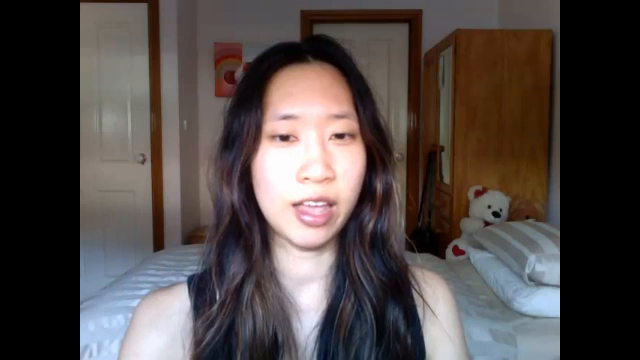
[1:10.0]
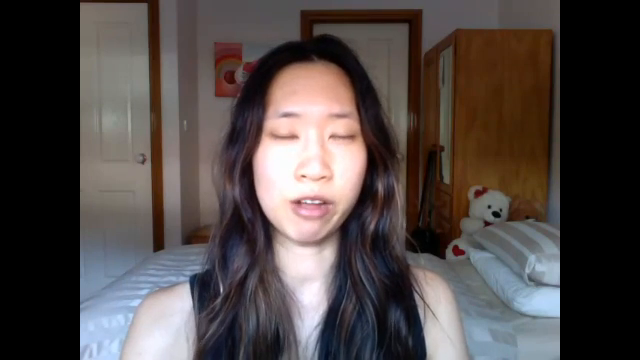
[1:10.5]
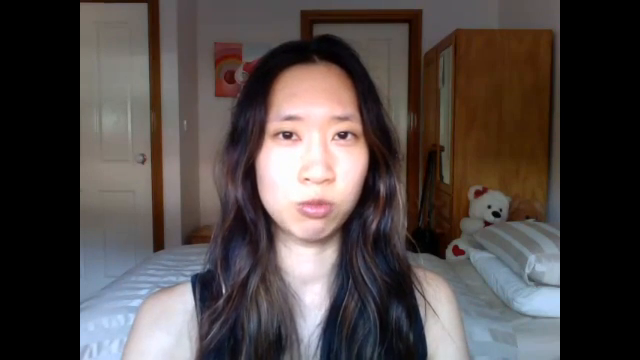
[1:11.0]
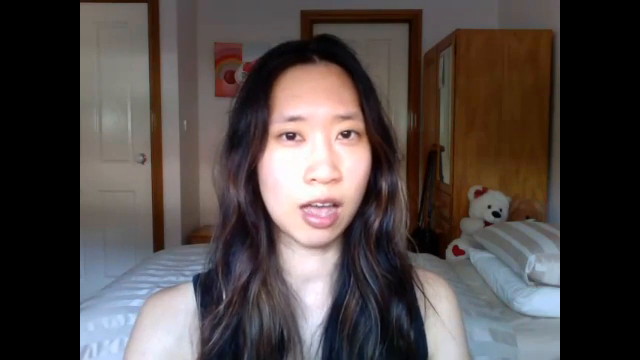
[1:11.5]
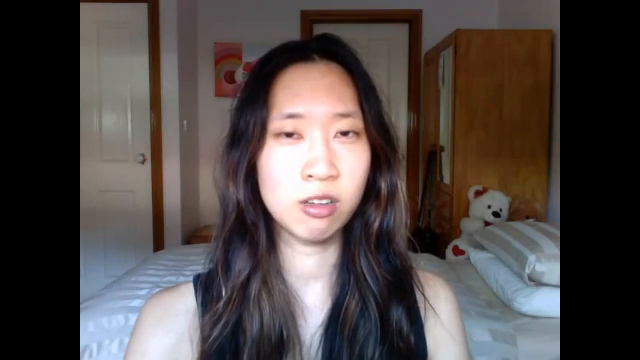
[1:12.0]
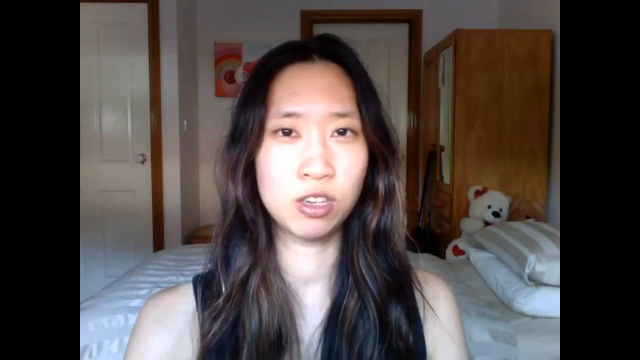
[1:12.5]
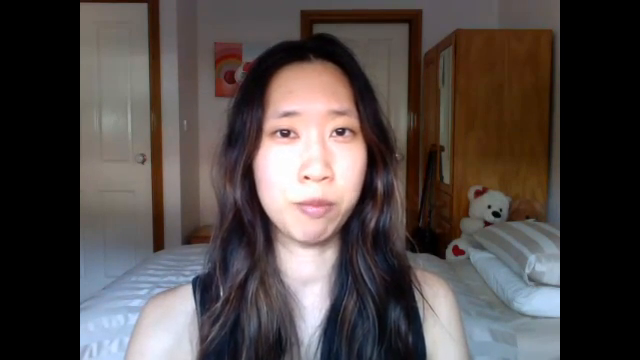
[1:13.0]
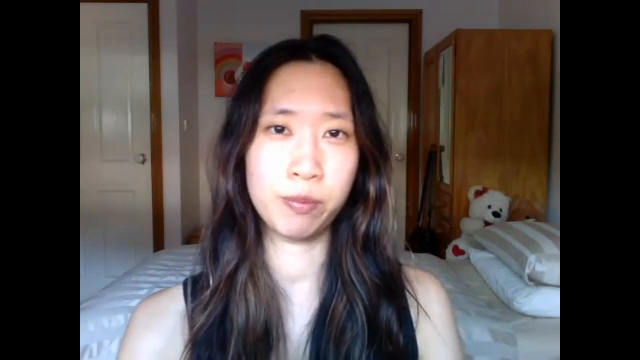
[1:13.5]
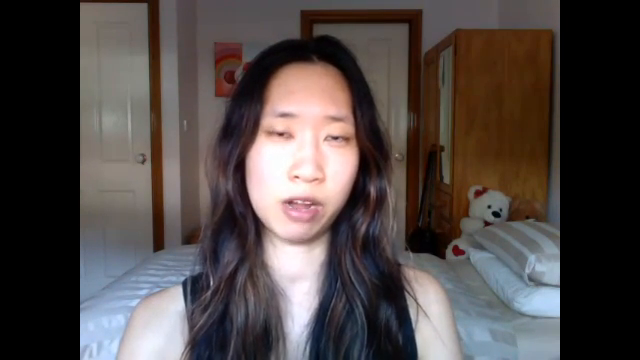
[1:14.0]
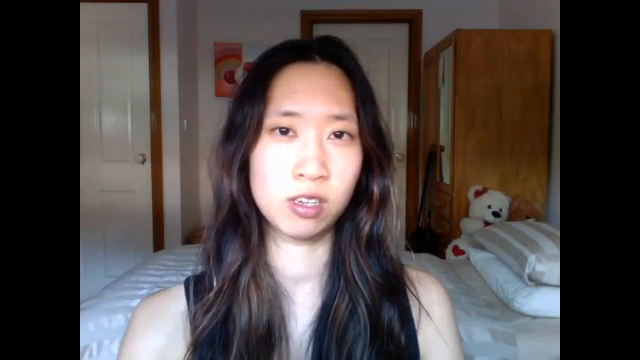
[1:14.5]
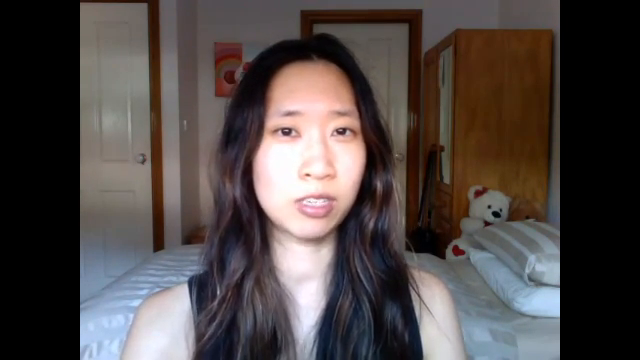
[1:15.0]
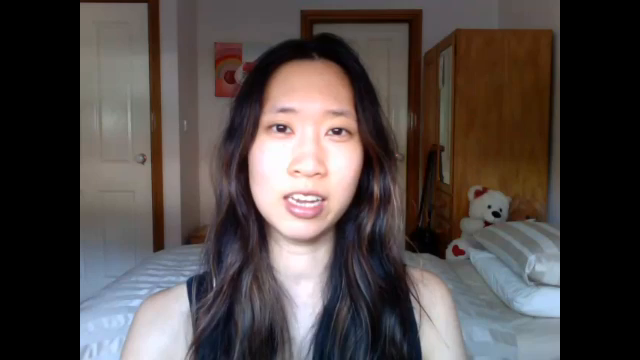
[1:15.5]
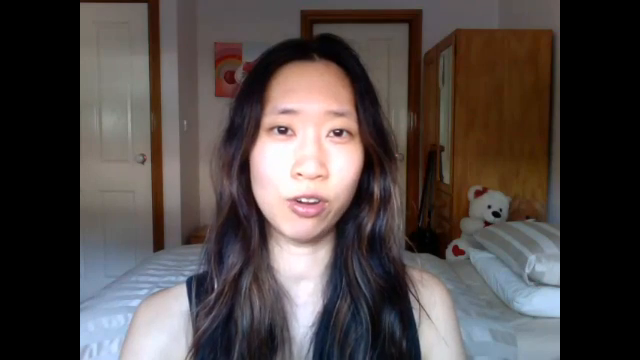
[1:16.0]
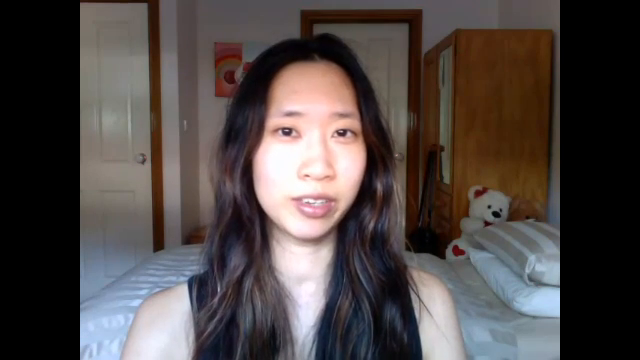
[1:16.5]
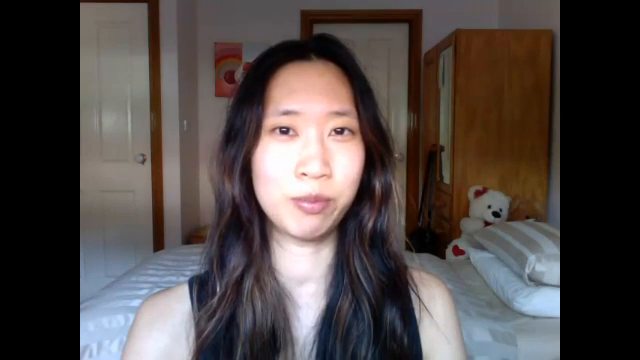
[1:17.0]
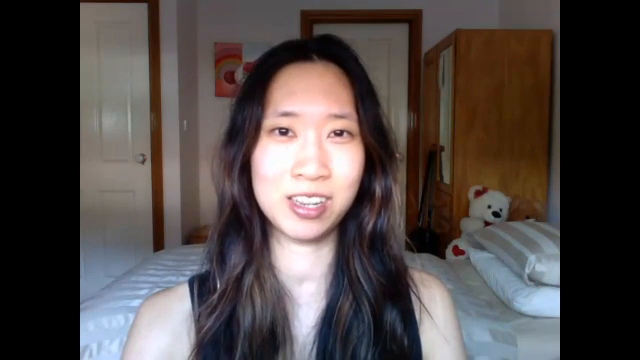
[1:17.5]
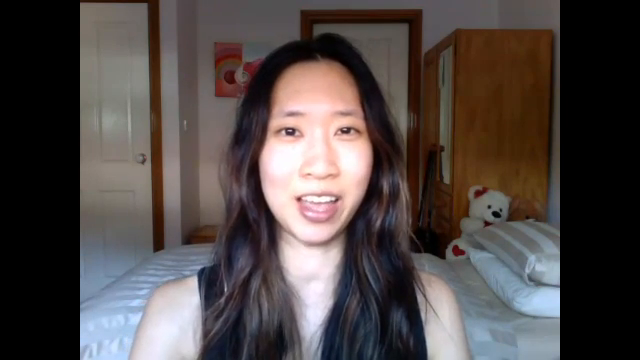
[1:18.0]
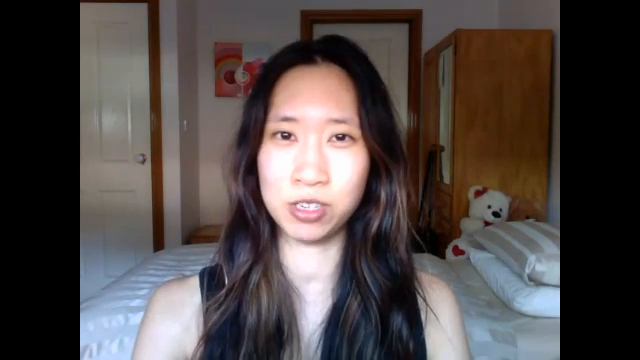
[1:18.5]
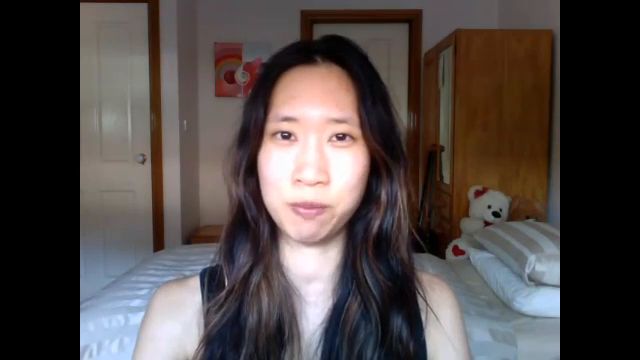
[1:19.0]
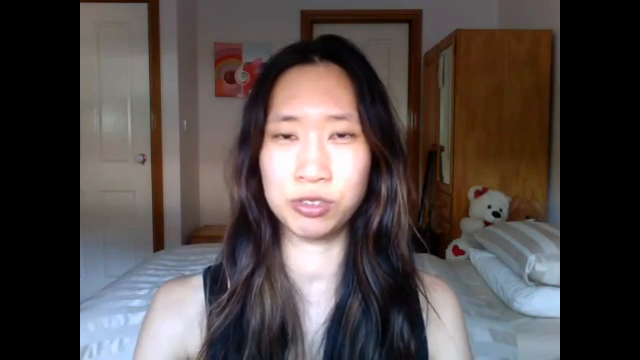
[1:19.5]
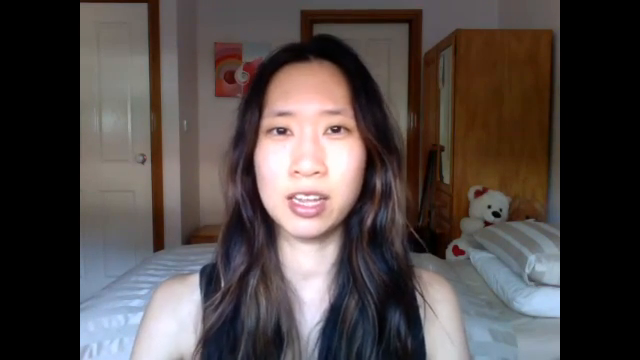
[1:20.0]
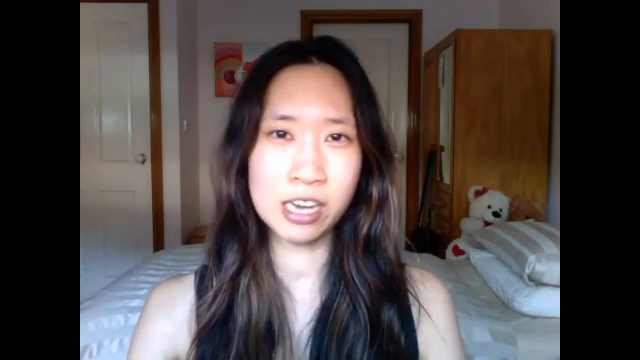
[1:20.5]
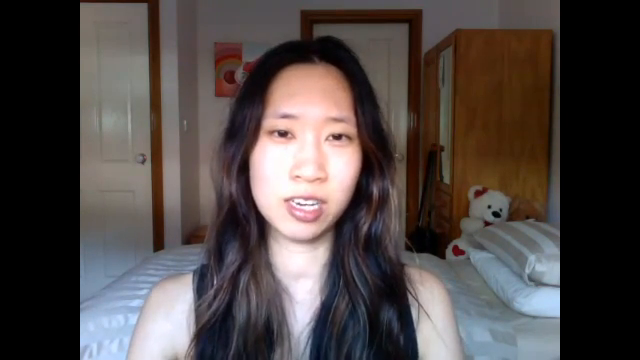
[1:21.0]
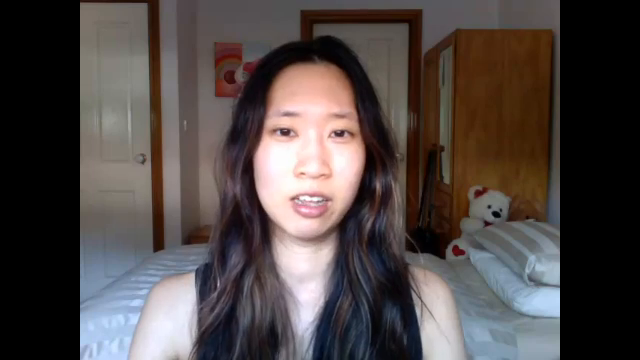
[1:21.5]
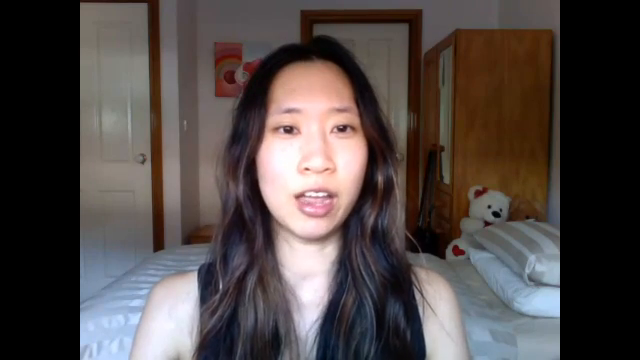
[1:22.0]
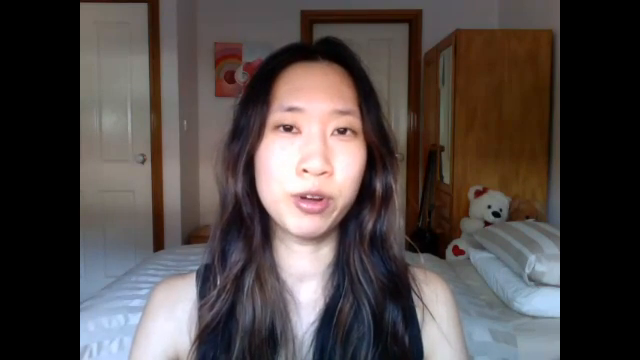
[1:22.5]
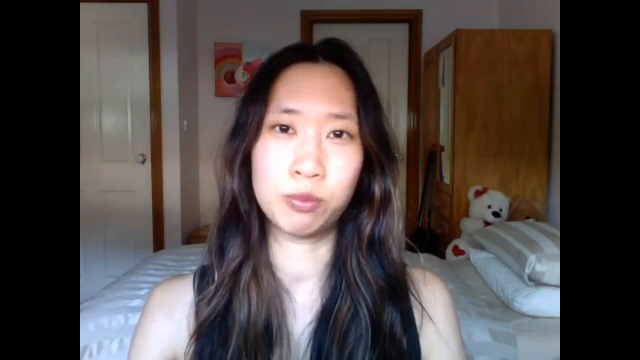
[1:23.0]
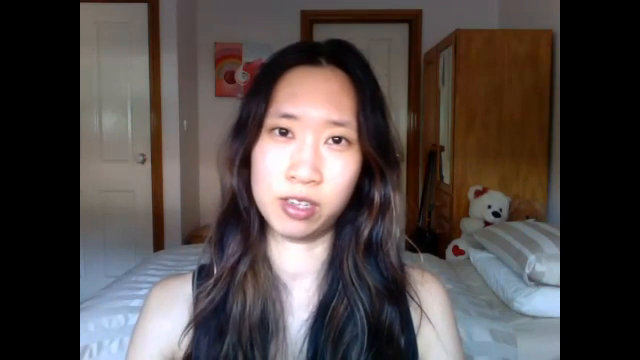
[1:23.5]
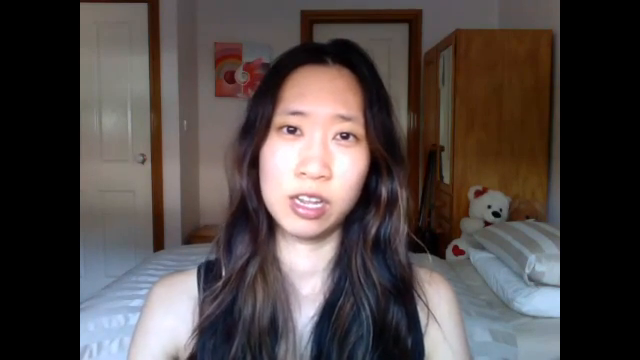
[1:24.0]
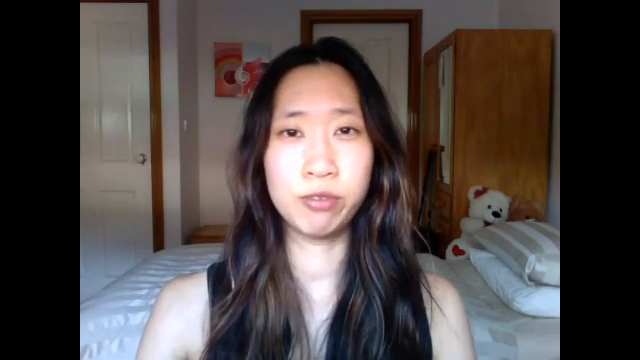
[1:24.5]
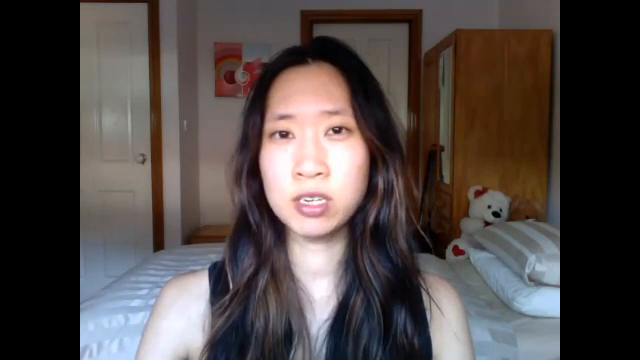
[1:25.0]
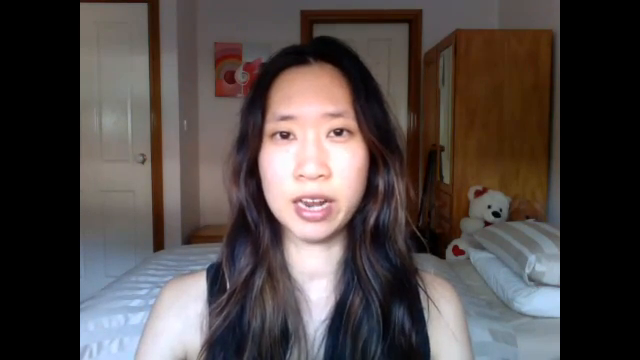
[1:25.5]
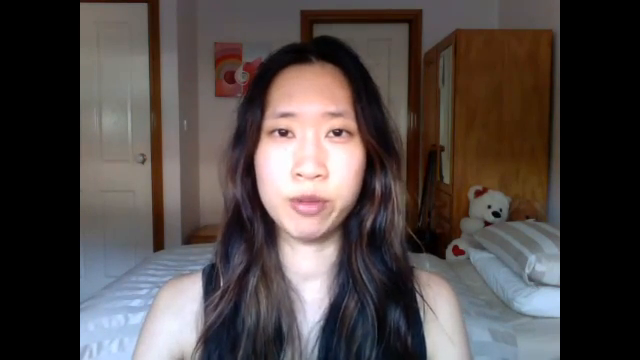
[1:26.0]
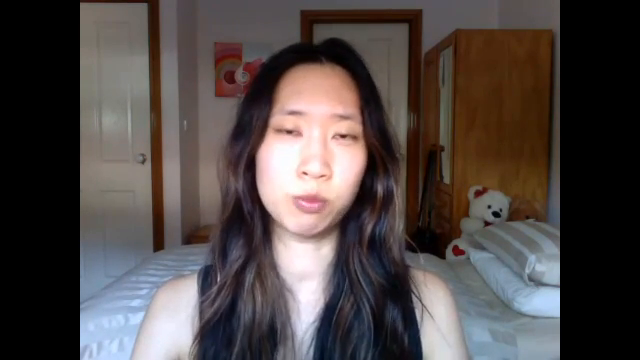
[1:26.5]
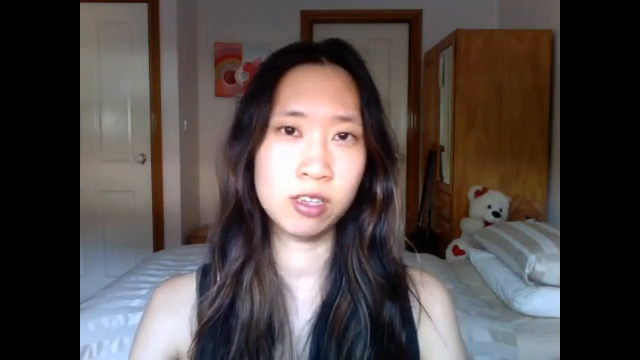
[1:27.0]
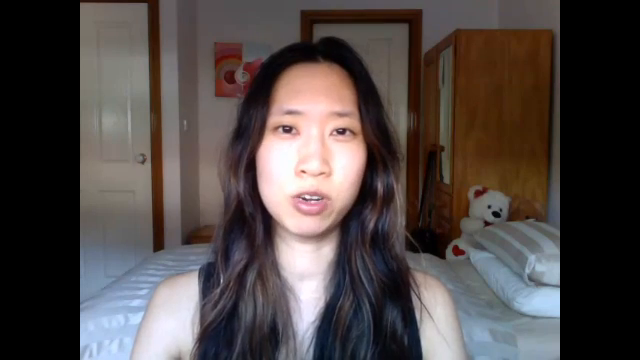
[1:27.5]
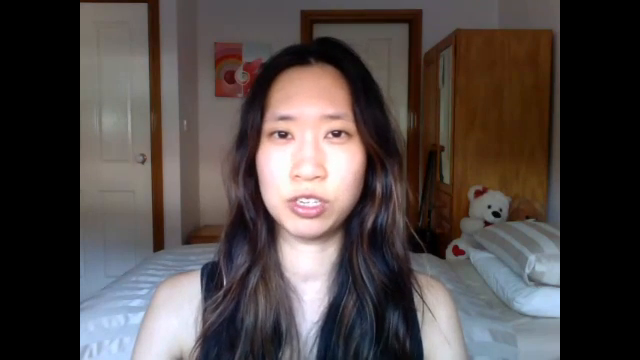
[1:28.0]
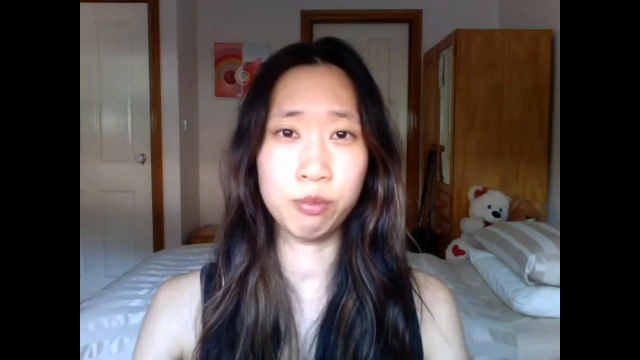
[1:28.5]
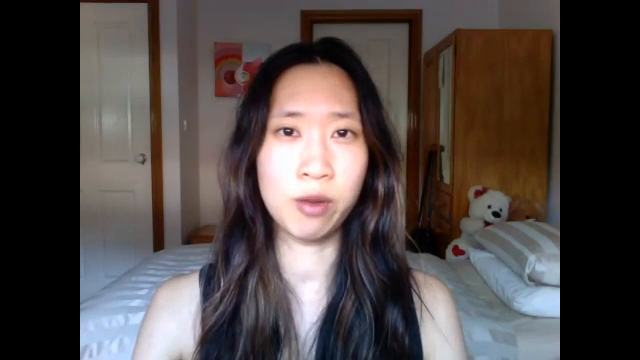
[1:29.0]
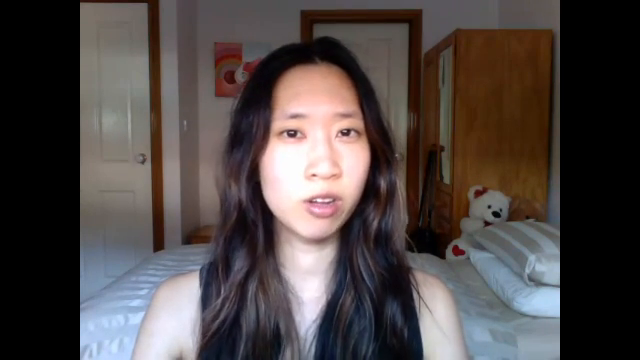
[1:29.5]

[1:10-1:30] The Asian woman is shown discussing the article, wearing what appears to be a black sleeveless shirt. The walls are white and the doors are an eggshell-like color. The armoire or dresser to the right behind her appears to be made of oak or perhaps walnut wood, and there seems to be a towel, perhaps a shirt or a dress, hanging from it. Her bed is made with two pillows; the bedding appears gray and white, the bottom pillow is all white, and the top pillow has a gray and white striped pillowcase. She appears to be wearing shiny lip balm, with no other makeup apparent, and her expression remains neutral.